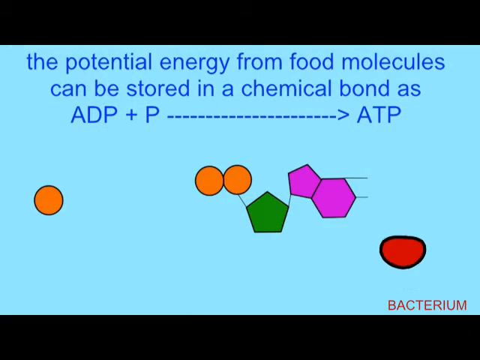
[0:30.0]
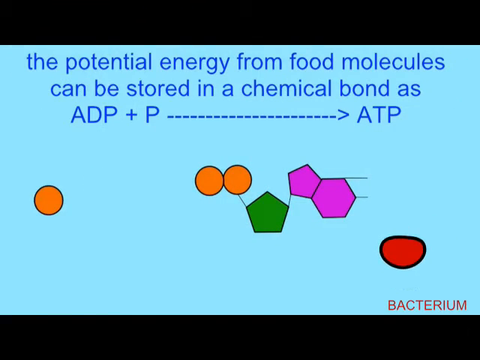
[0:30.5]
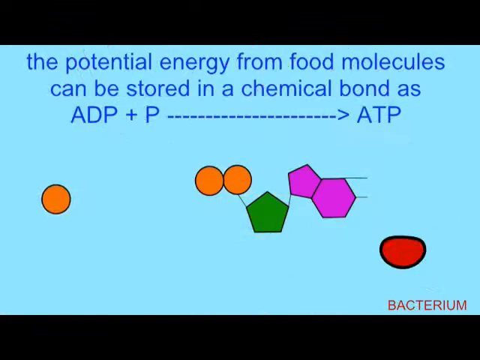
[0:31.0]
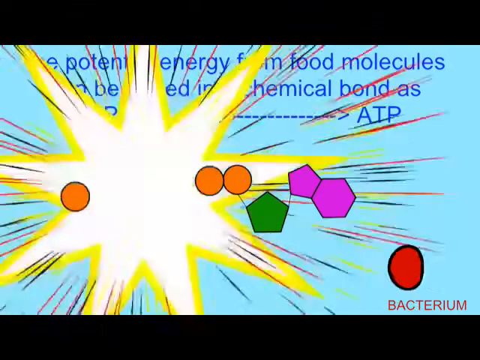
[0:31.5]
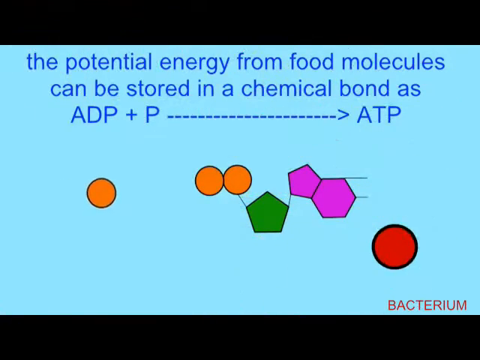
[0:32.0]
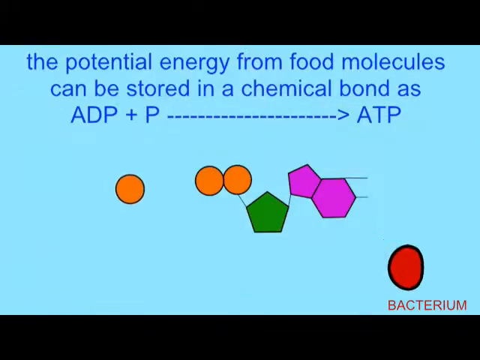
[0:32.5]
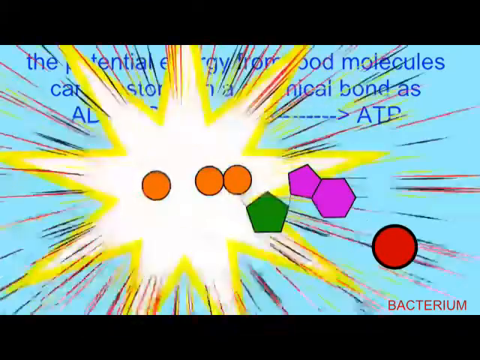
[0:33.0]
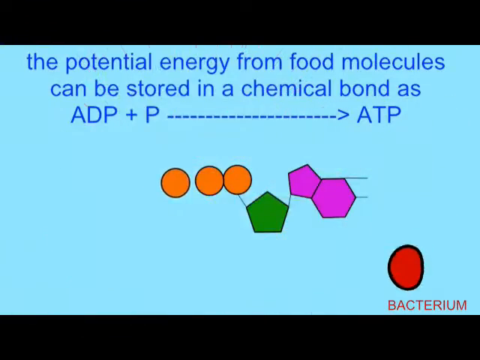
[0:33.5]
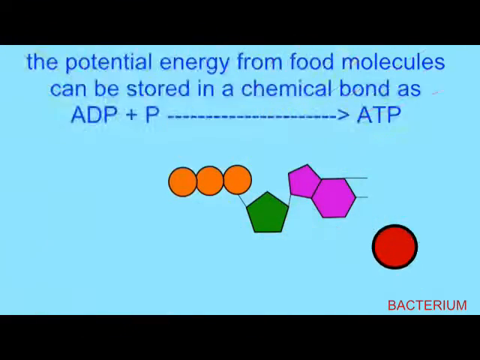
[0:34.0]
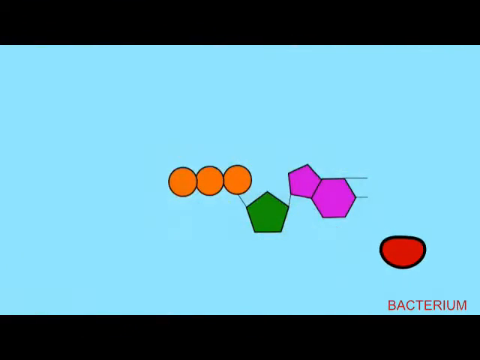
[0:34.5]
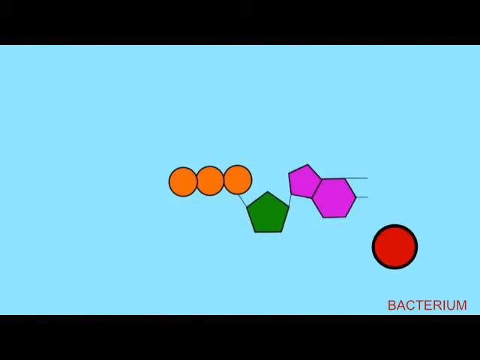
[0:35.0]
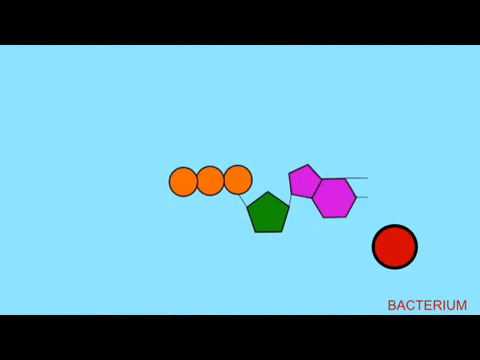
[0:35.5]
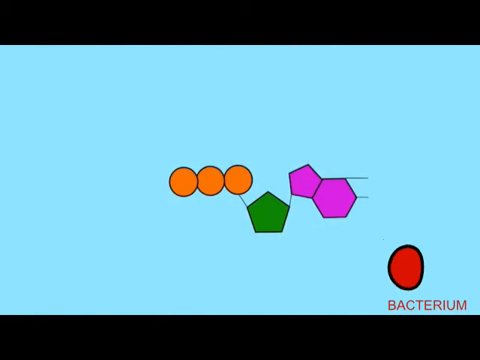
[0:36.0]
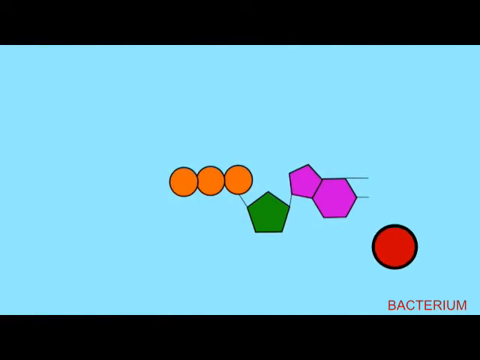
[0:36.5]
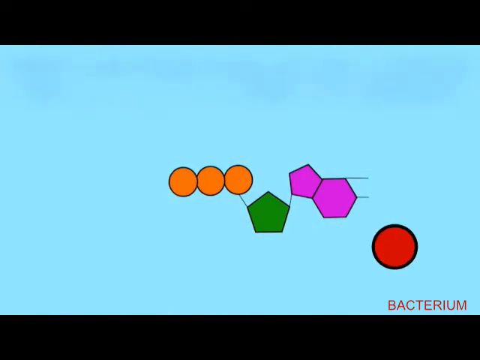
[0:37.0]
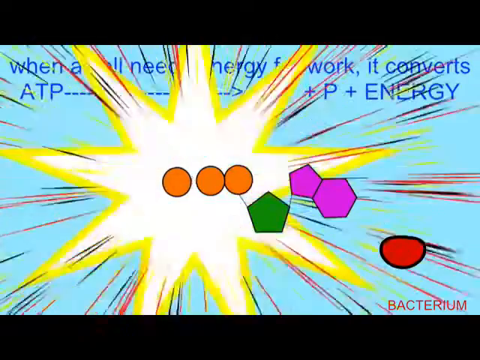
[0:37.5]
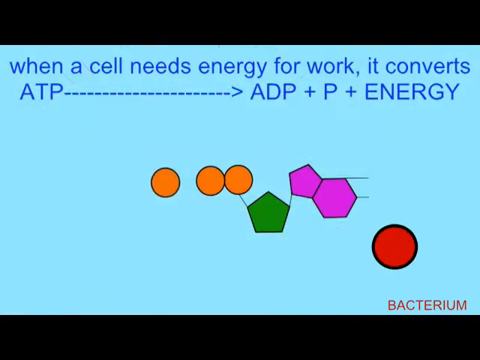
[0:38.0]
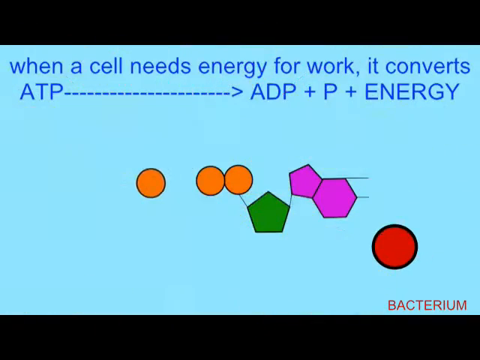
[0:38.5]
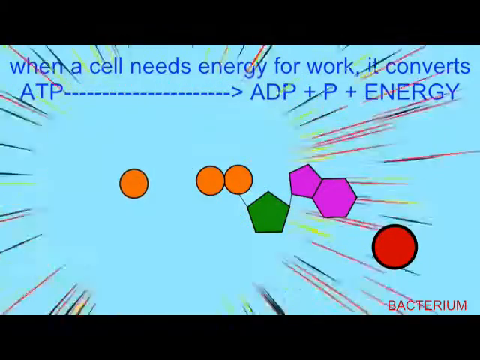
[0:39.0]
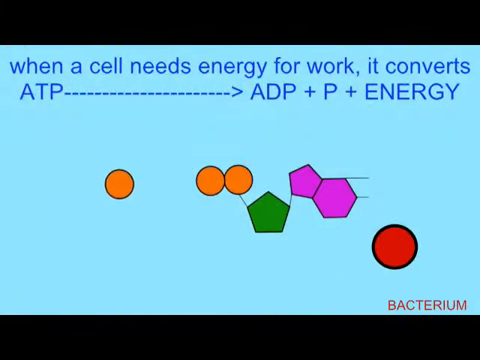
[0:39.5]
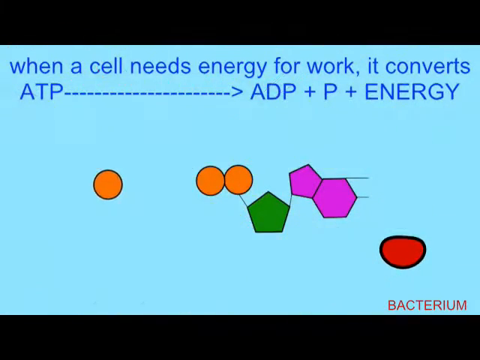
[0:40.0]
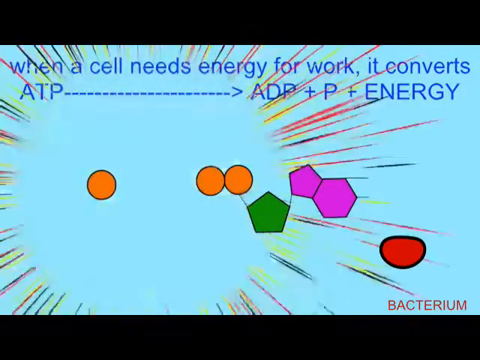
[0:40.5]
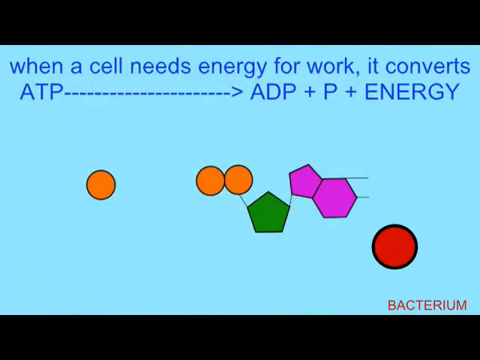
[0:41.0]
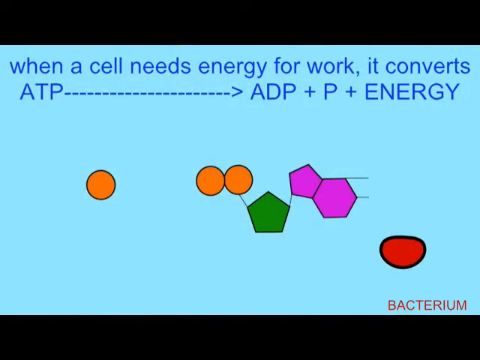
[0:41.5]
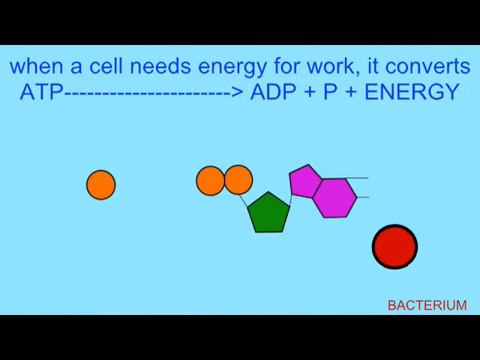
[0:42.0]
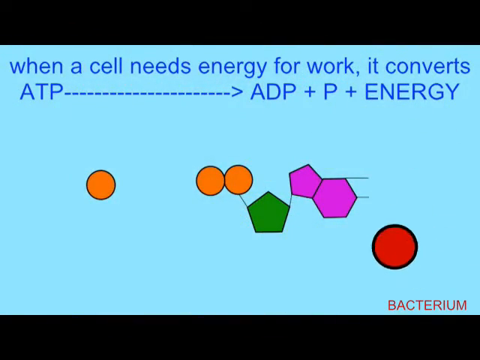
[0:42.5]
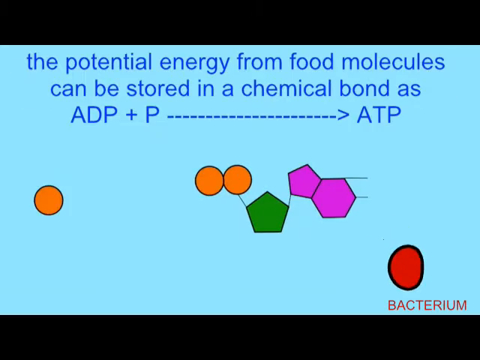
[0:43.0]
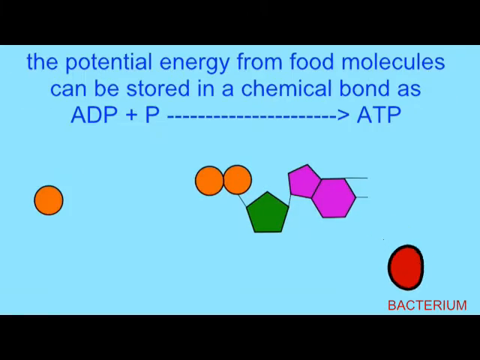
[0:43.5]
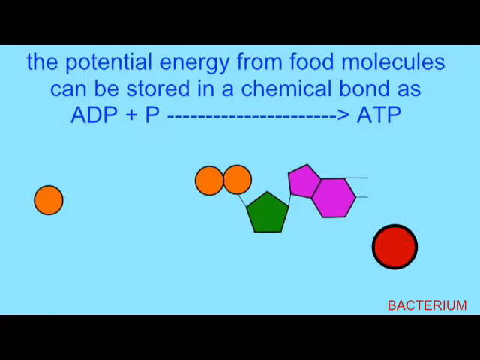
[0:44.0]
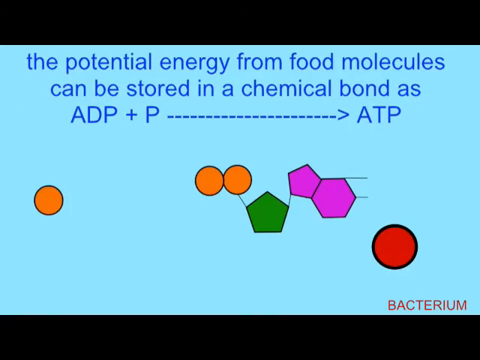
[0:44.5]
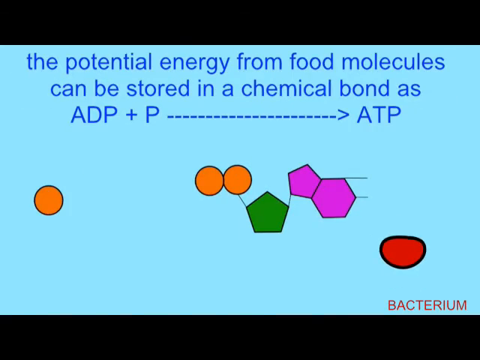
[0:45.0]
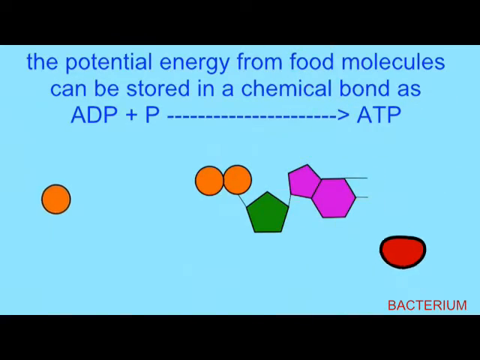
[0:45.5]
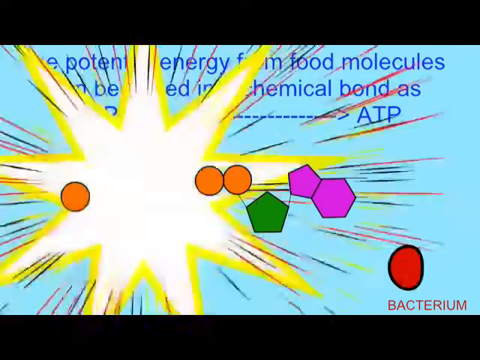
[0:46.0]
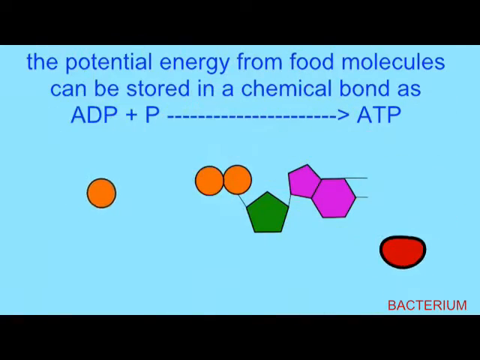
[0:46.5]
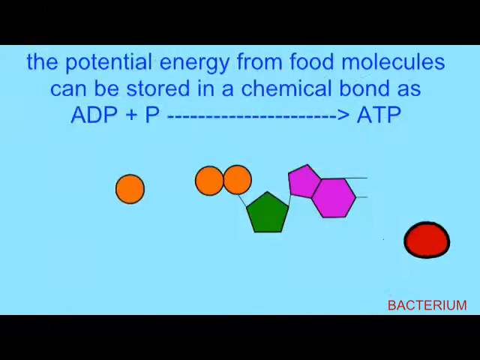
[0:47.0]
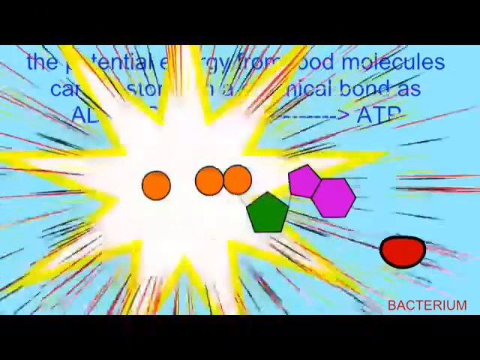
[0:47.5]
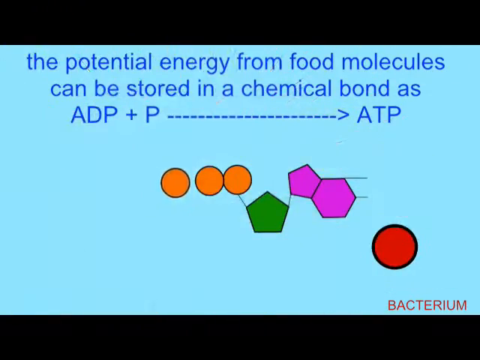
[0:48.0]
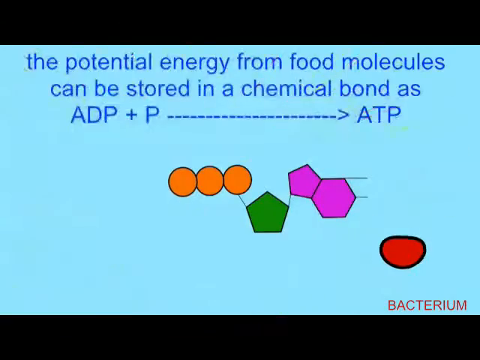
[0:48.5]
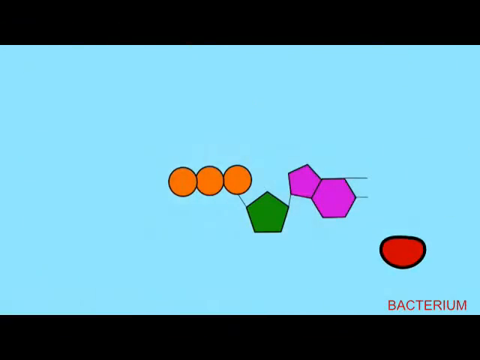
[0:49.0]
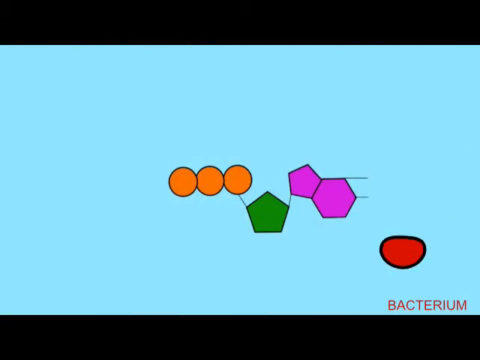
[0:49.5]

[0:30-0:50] The same diagram continues with the red circle pulsing: its top comes down almost flat while the rest stays rounded, then it pops back out to a round ball, repeatedly. The orange circle moves back to the right toward the other two orange circles, and a white Kapow burst with a yellow border comes up between them as they touch again. The text goes off the top, then comes back across the top as the orange circle separates from the other two and heads back to the left. The red circle keeps pulsating. The orange circle moves back to the other orange ones again, and this time the Kapow sign has no words. In the bottom left corner, "bacterium" is written in red. The dark blue text across the top reads "the potential energy for food molecules can be stored in a chemical bond as ADP plus P", followed by about 20 little dashes and an arrow on the right side labeled "ATP".